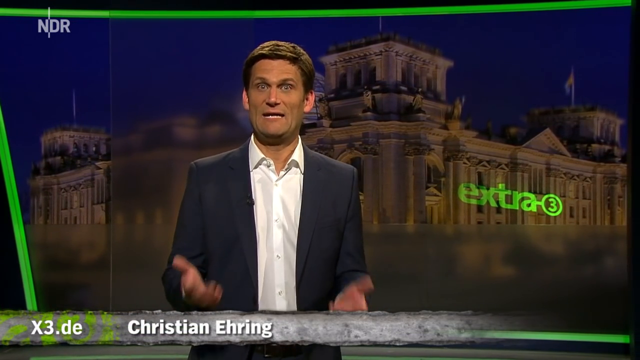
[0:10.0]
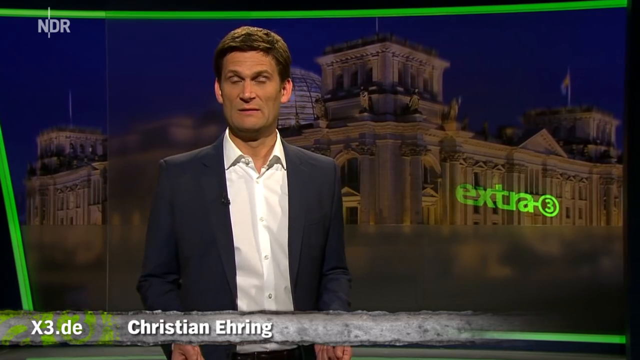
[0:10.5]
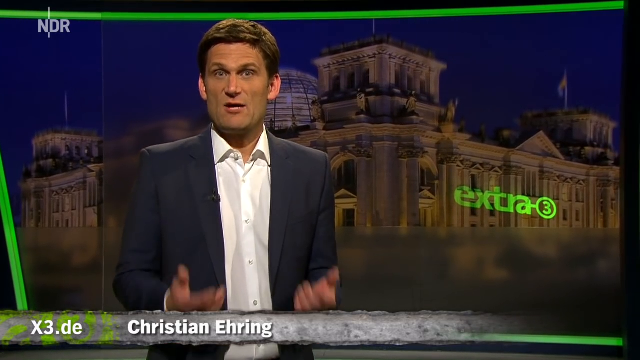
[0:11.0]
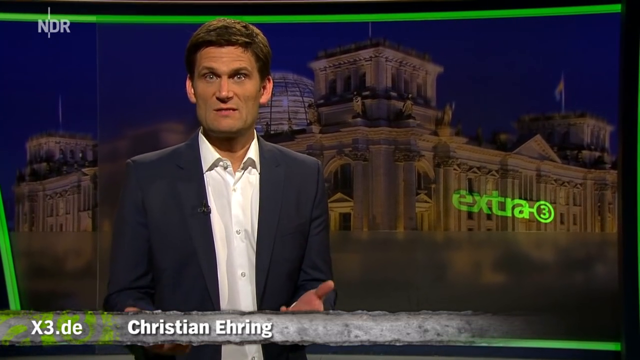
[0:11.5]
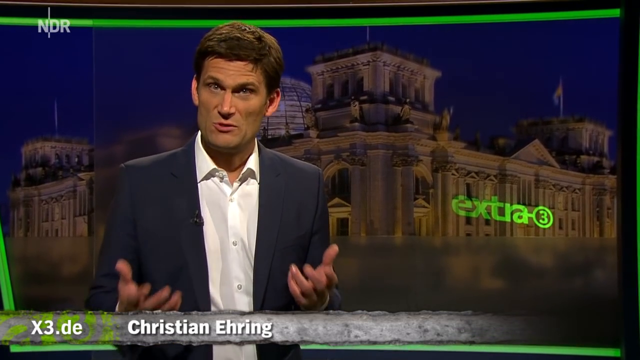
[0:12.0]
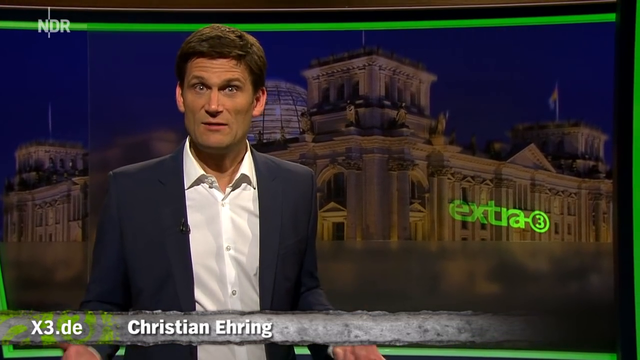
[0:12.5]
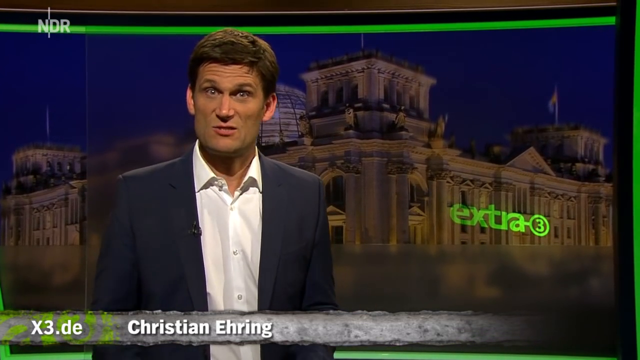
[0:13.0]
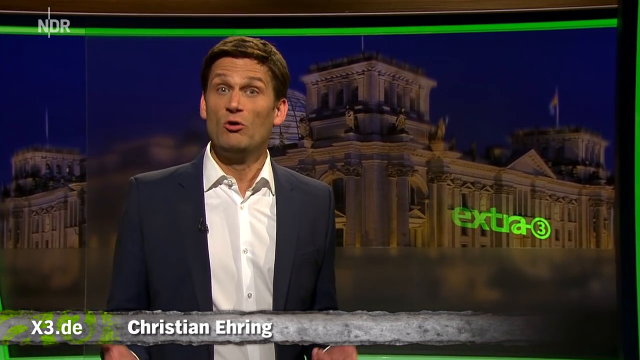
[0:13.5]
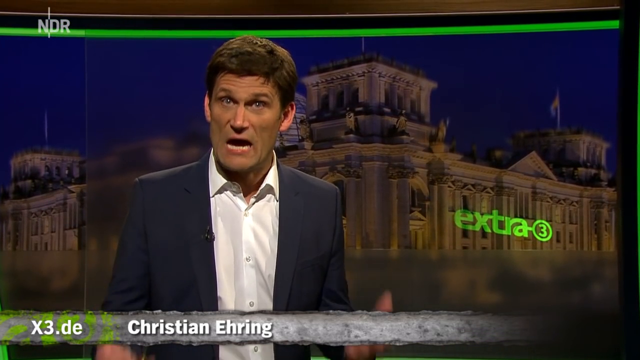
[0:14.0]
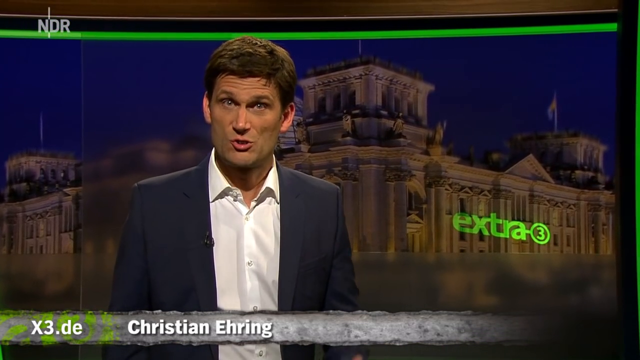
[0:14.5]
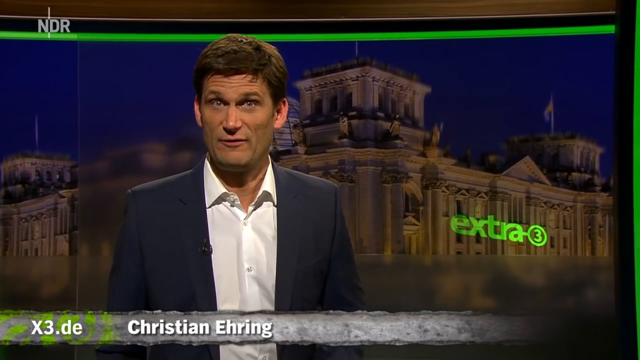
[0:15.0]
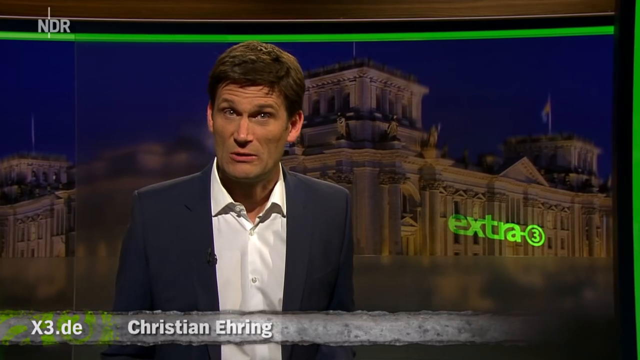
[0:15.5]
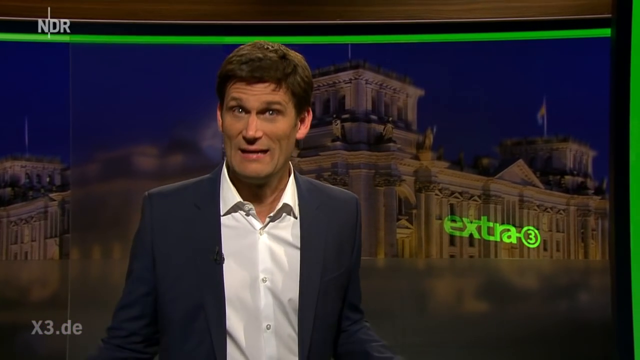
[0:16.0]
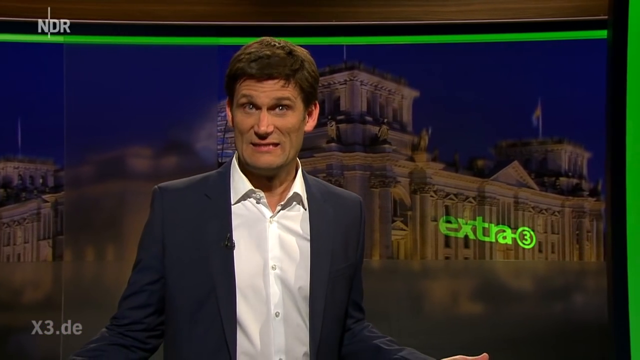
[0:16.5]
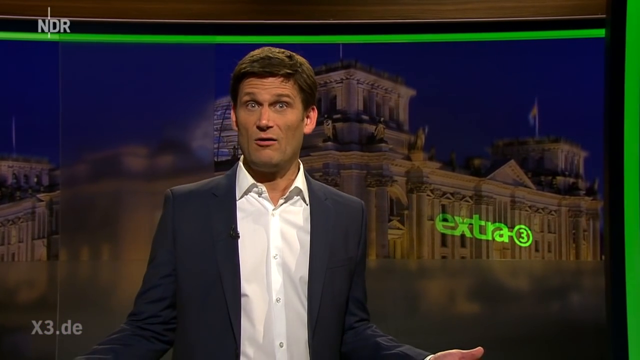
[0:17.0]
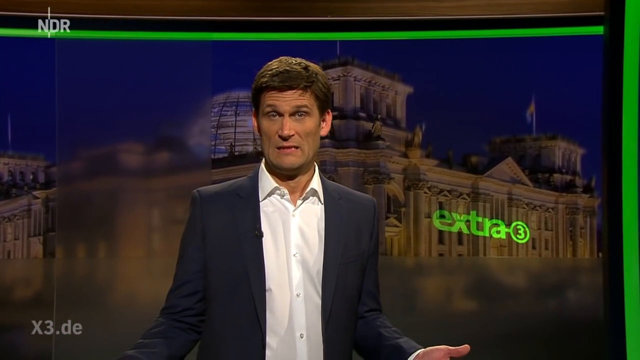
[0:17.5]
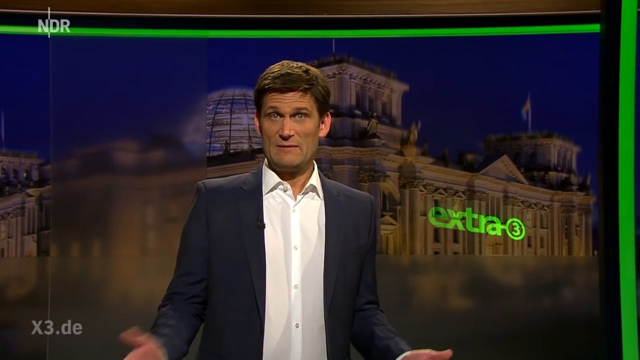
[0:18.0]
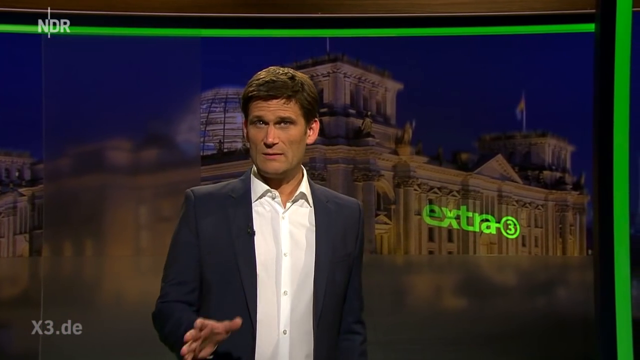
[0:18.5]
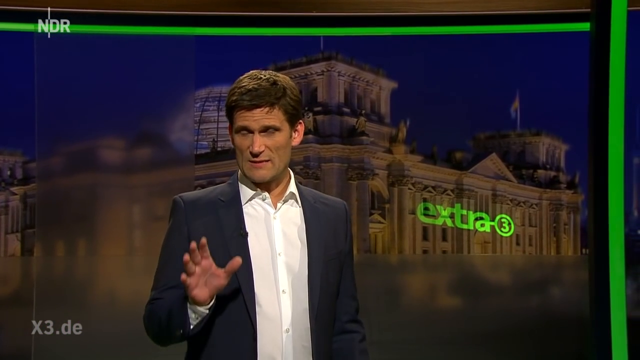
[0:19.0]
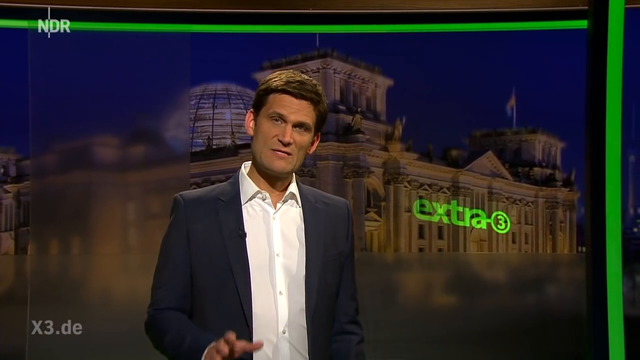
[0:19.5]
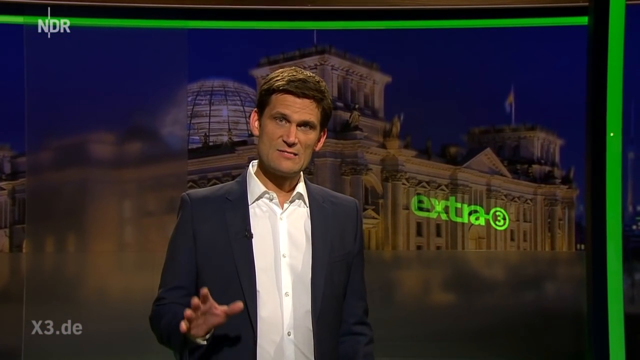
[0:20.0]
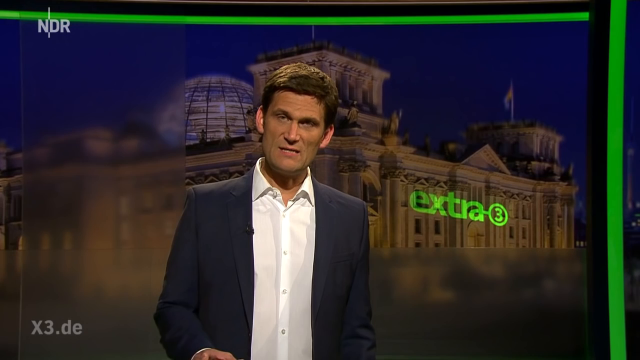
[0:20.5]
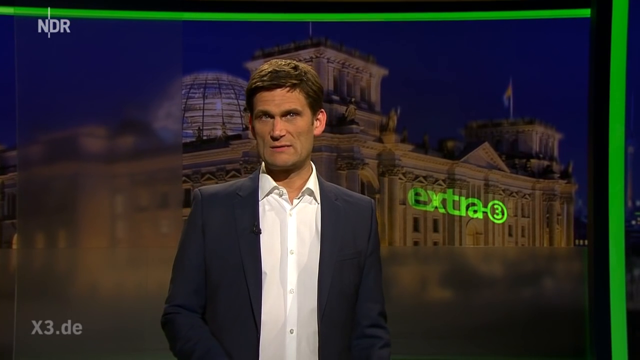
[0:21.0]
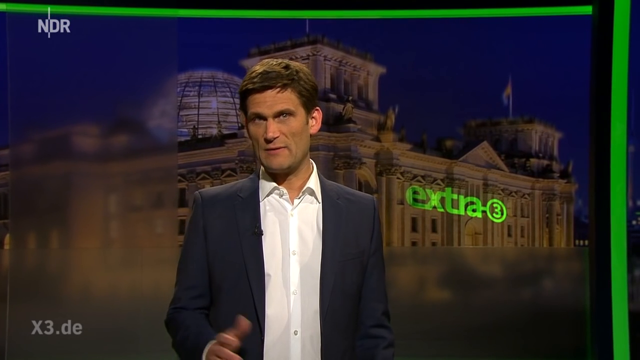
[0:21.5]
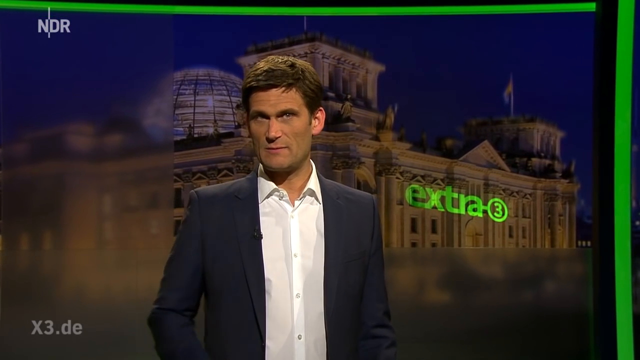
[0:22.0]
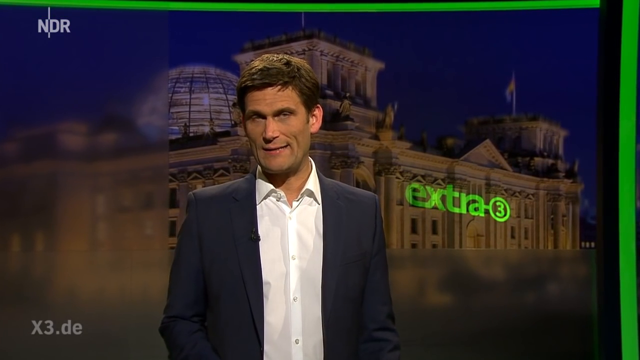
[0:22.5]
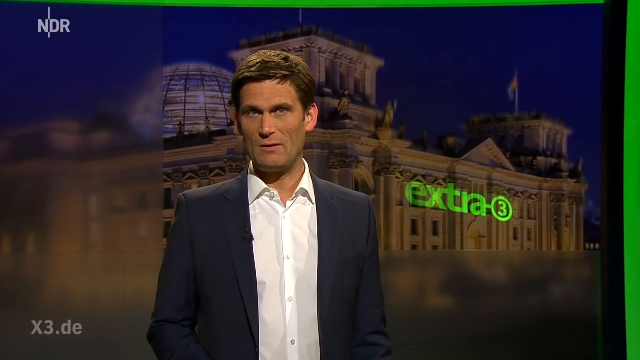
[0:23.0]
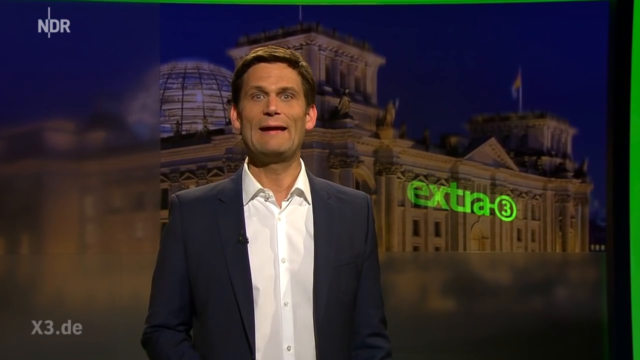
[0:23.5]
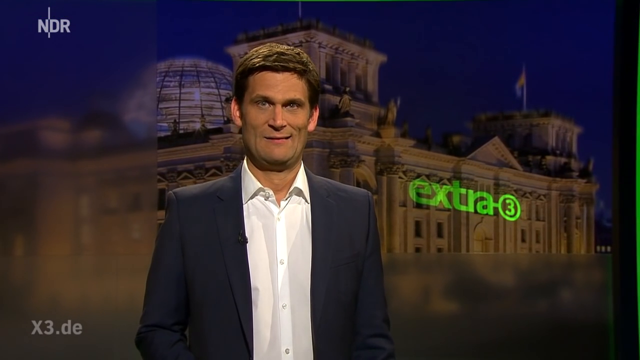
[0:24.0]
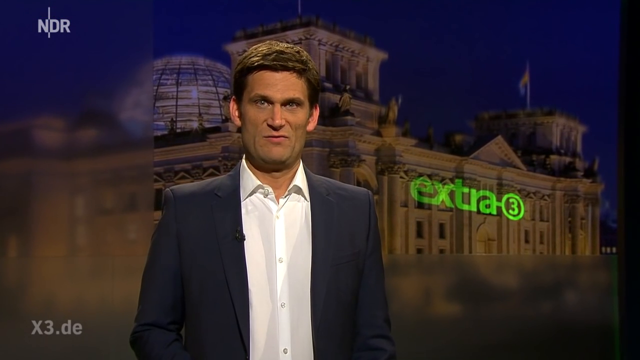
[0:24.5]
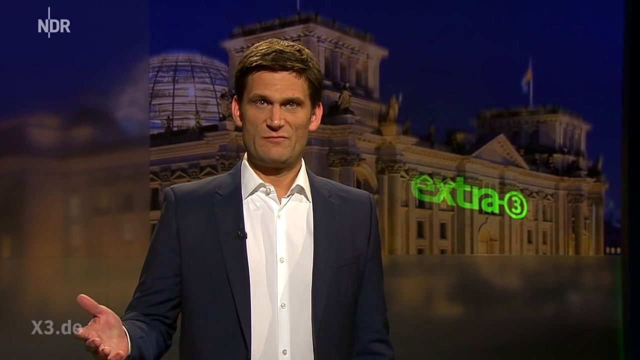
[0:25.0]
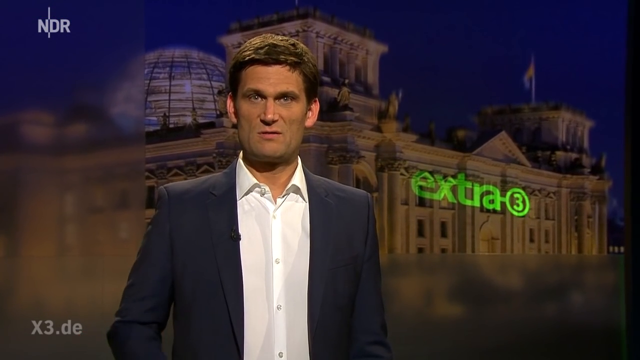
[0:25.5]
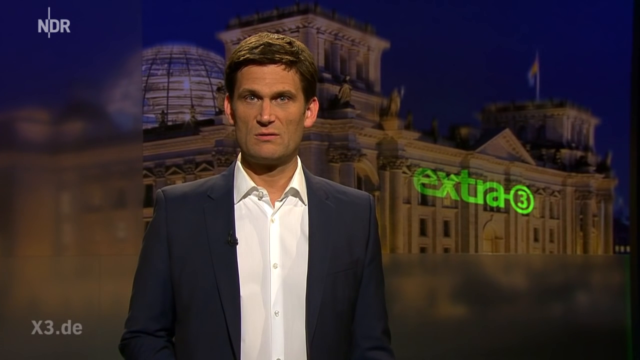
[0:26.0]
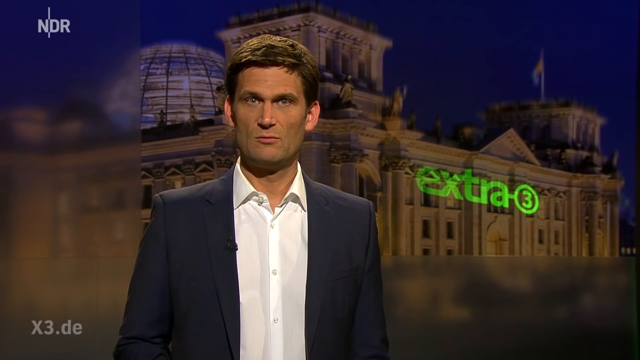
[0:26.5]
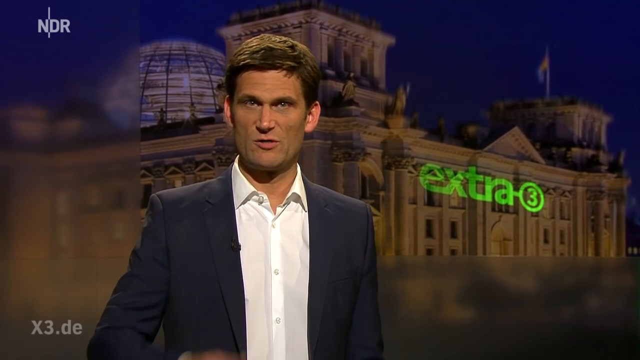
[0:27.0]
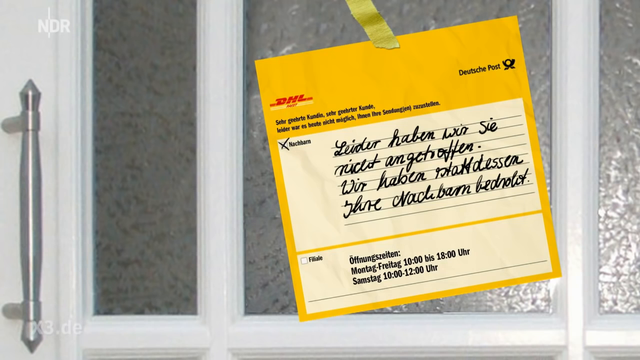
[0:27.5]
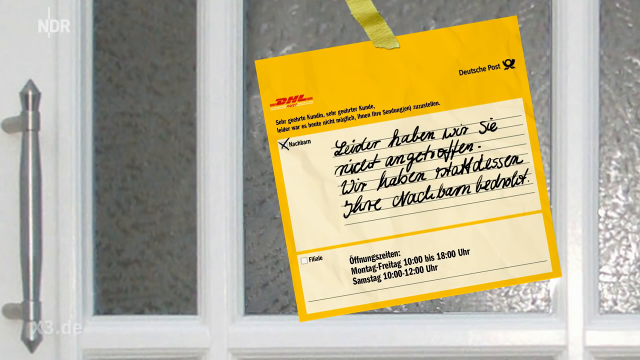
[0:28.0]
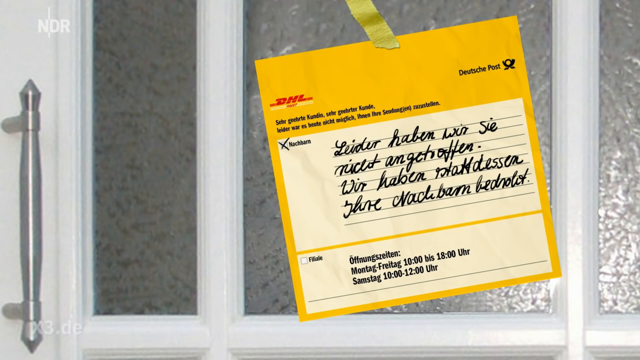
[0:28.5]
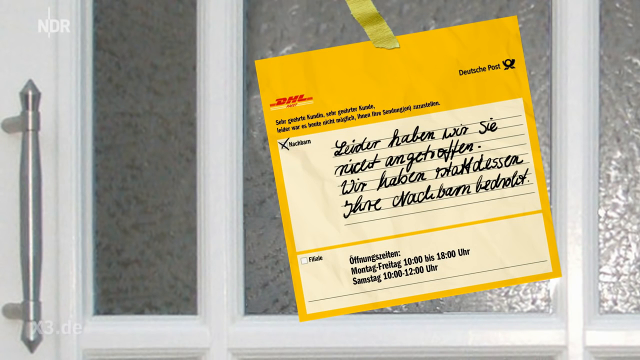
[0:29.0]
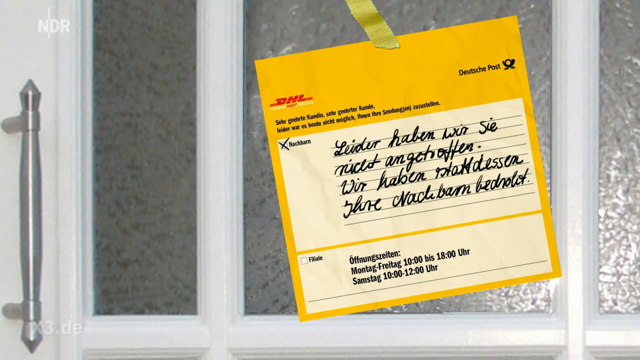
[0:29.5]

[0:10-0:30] The same man, Christian, is in a studio. Behind him is a monitor showing an image, possibly live, of a huge structure, perhaps a palace; it looks like a historical structure that is still in use, and it is nighttime. As he talks, he opens his hands and palms and keeps lifting them up and down, at one point lifting his right palm, which appears as his left hand from the viewer's side. A DHL tag is then shown. On the right side of it, text reads "Deutsche post". Two lines of black text on it are hard to read and are not in English, though the word "leider" is recognizable.